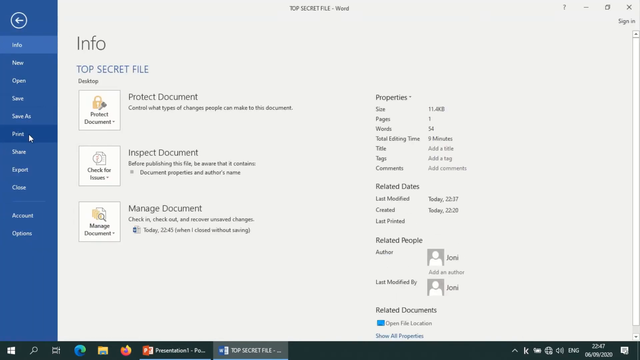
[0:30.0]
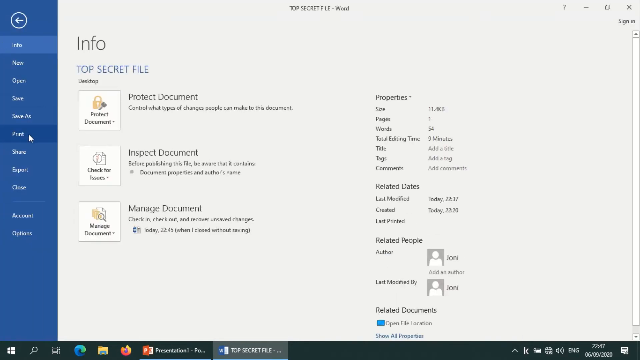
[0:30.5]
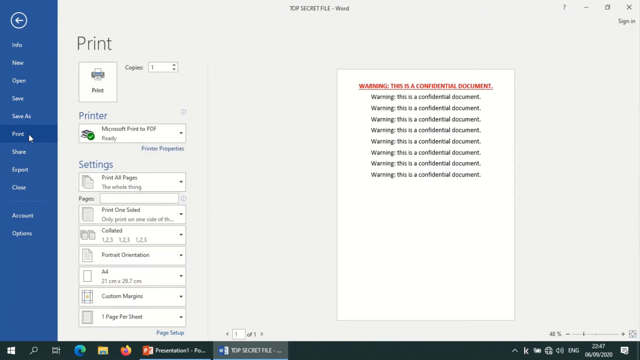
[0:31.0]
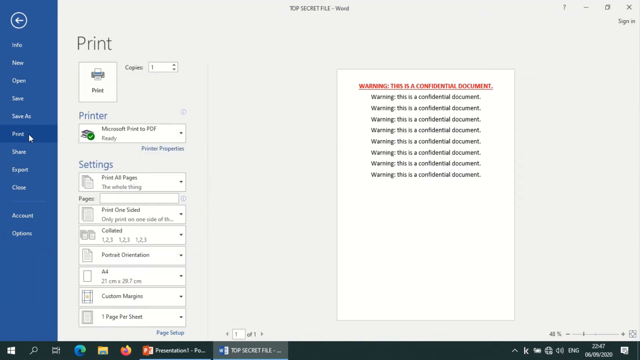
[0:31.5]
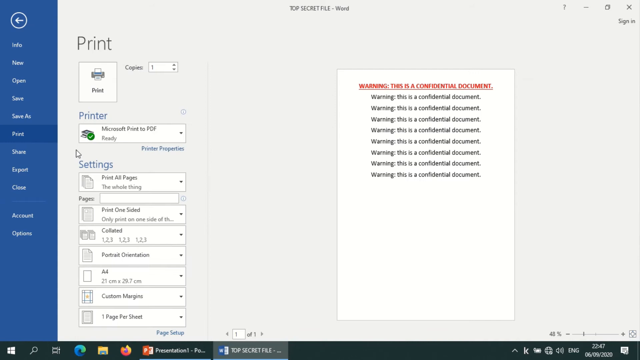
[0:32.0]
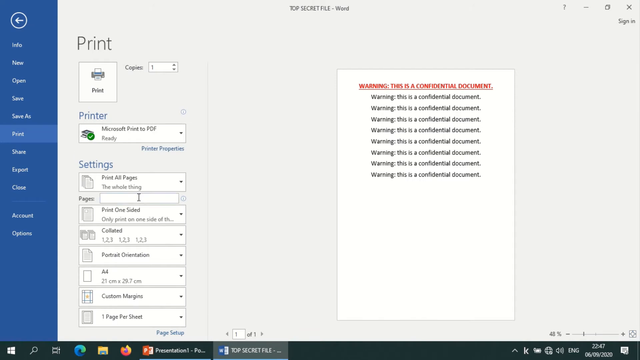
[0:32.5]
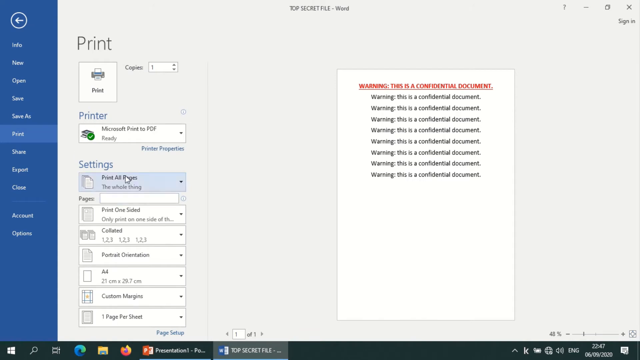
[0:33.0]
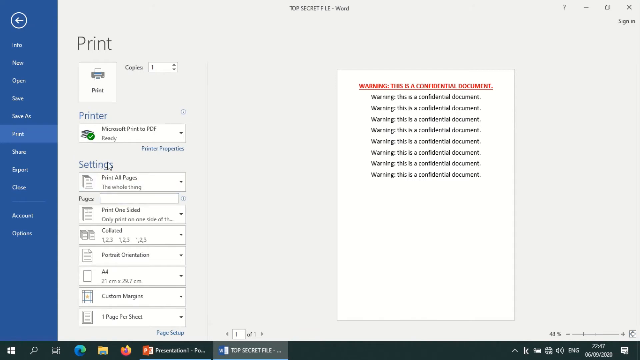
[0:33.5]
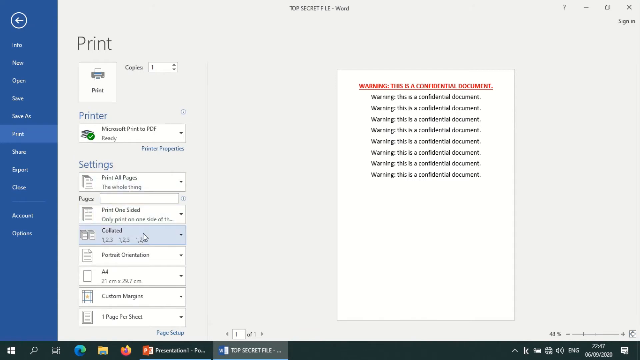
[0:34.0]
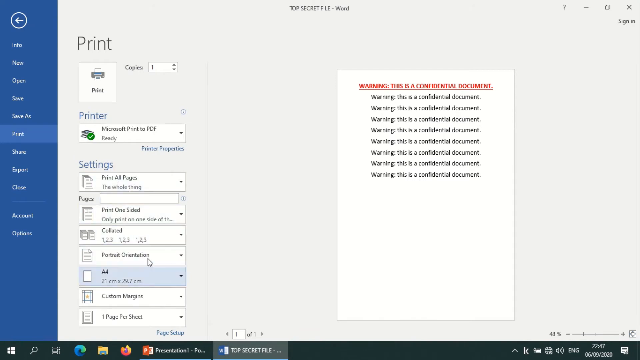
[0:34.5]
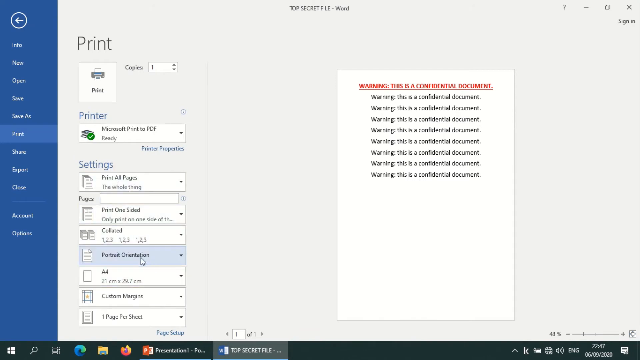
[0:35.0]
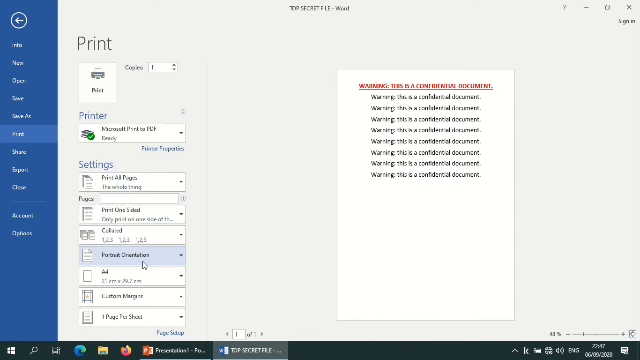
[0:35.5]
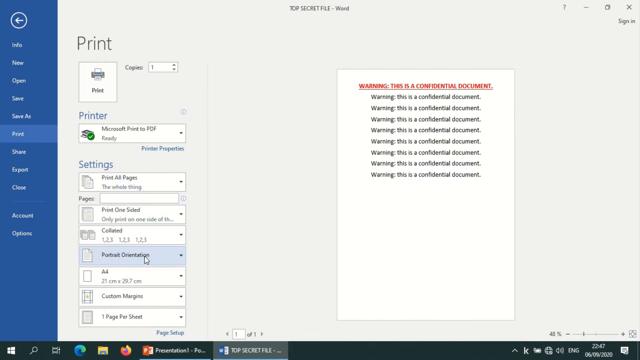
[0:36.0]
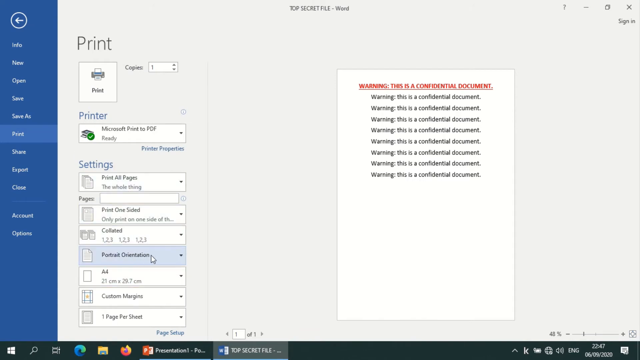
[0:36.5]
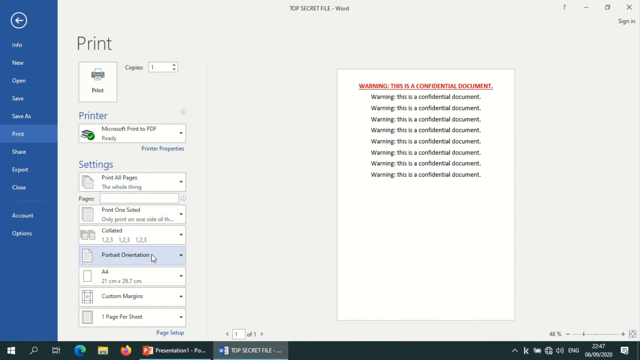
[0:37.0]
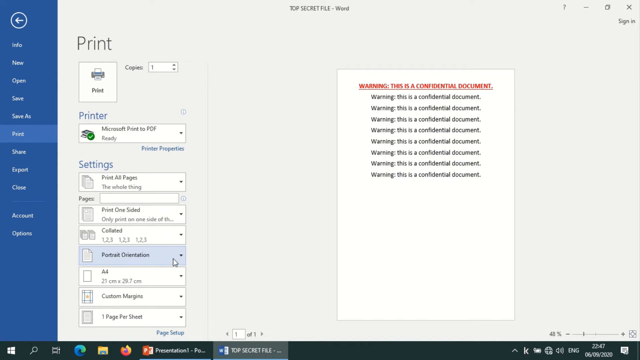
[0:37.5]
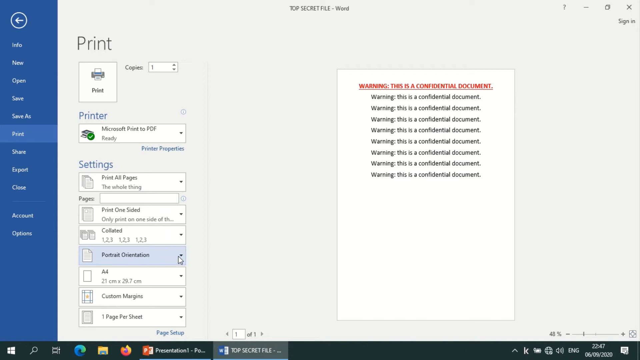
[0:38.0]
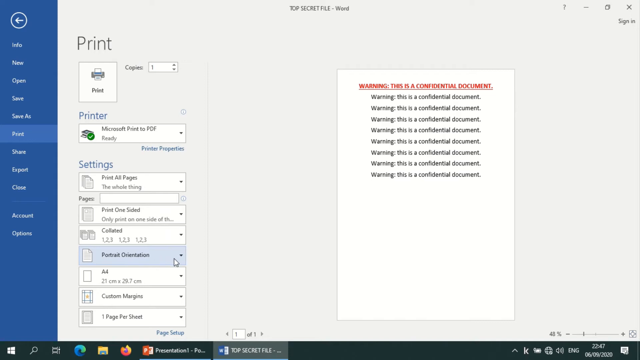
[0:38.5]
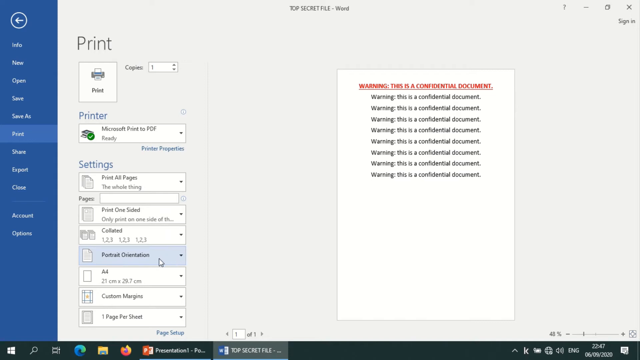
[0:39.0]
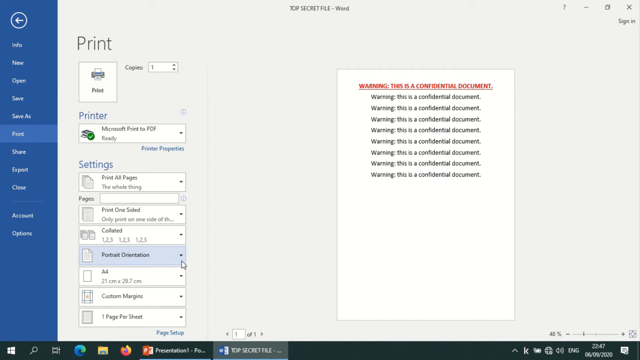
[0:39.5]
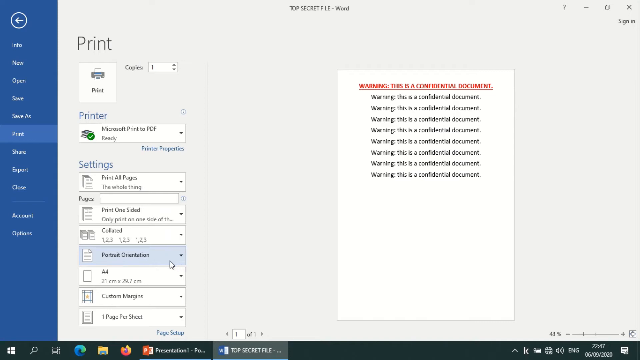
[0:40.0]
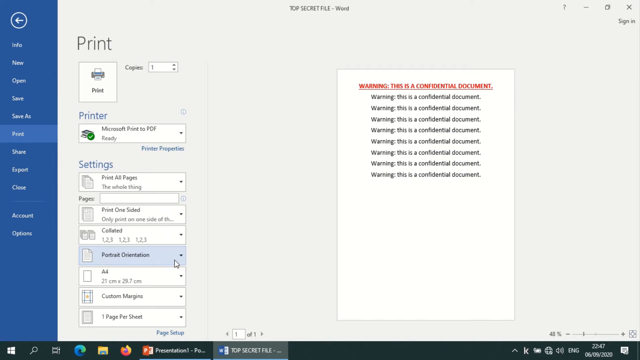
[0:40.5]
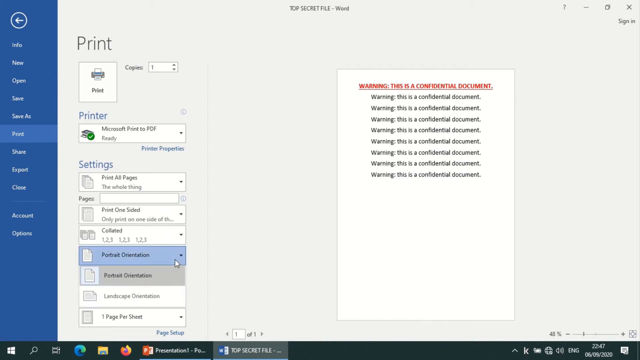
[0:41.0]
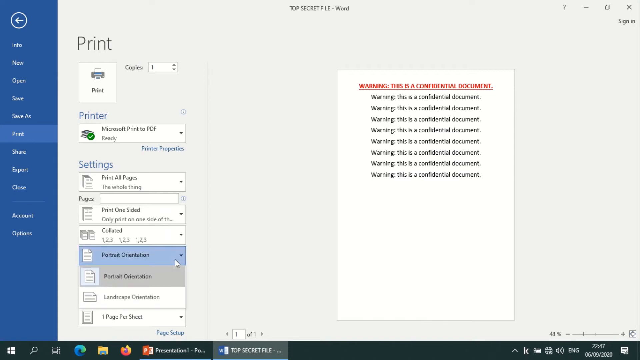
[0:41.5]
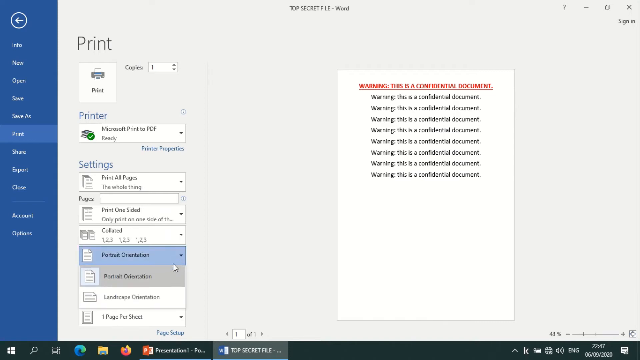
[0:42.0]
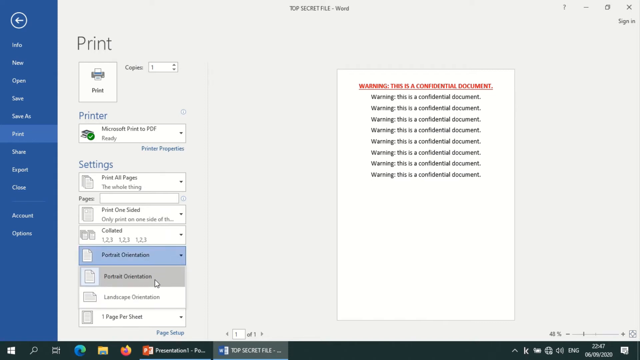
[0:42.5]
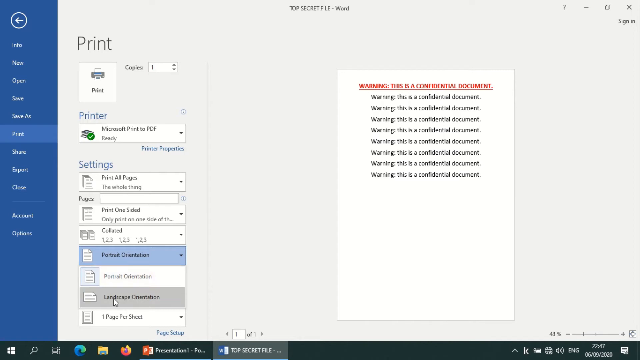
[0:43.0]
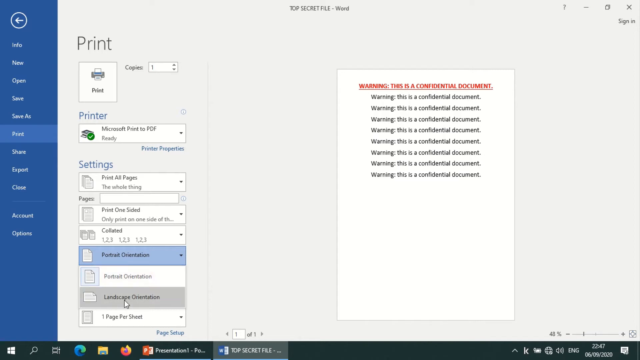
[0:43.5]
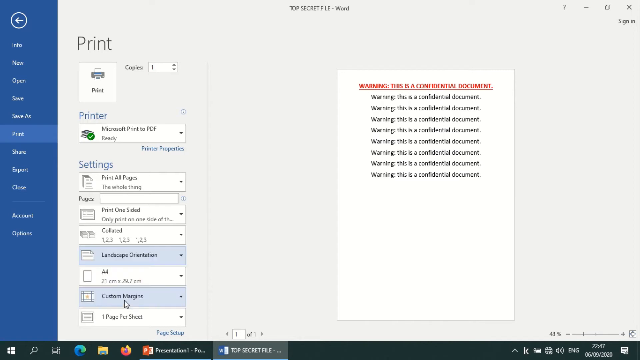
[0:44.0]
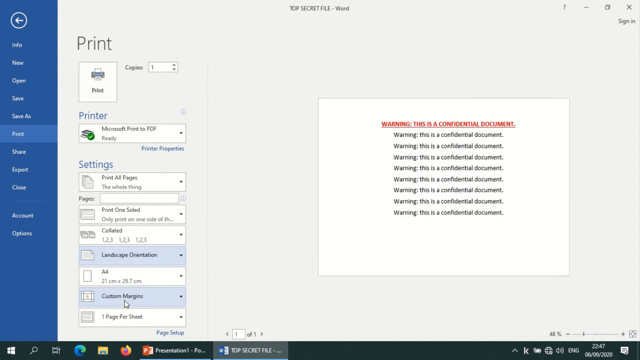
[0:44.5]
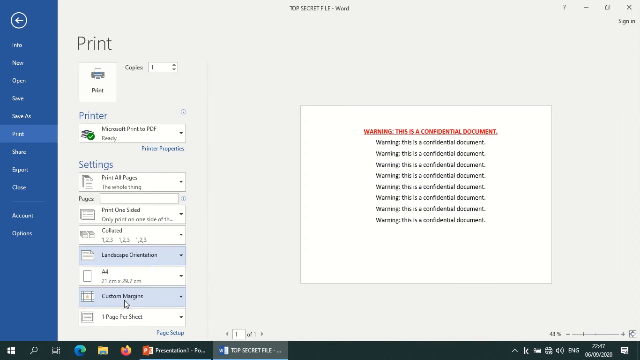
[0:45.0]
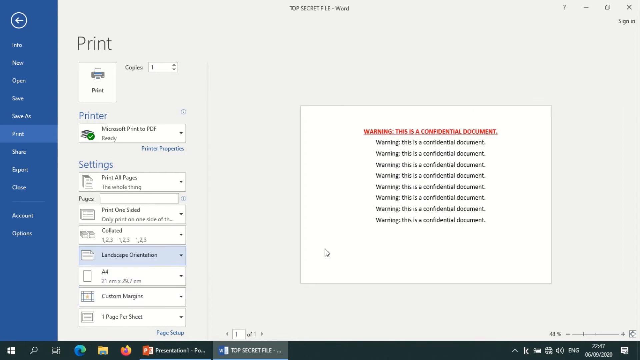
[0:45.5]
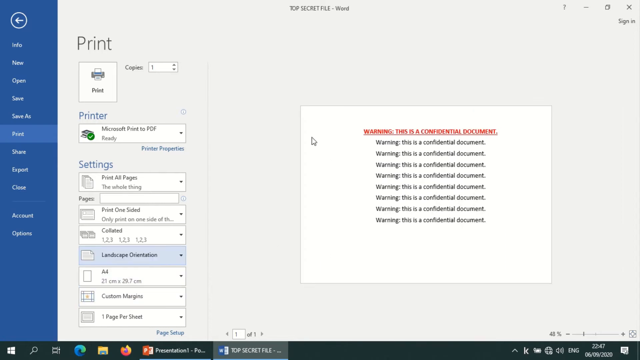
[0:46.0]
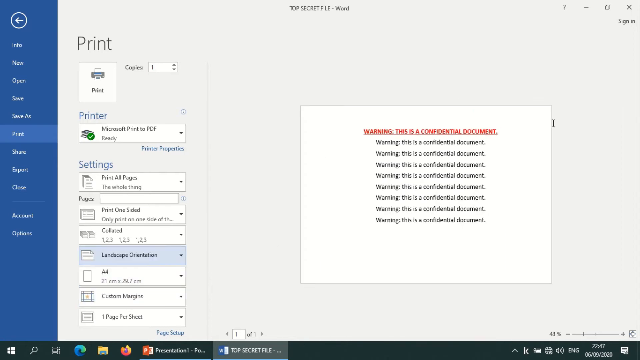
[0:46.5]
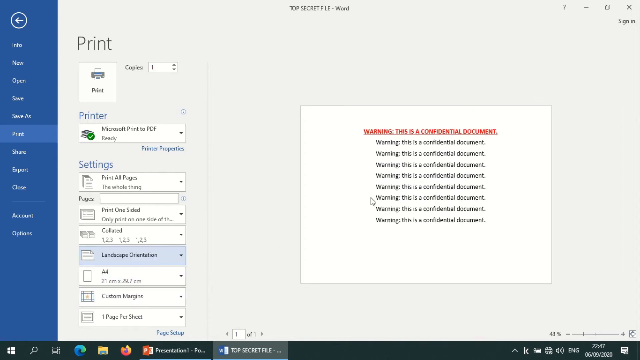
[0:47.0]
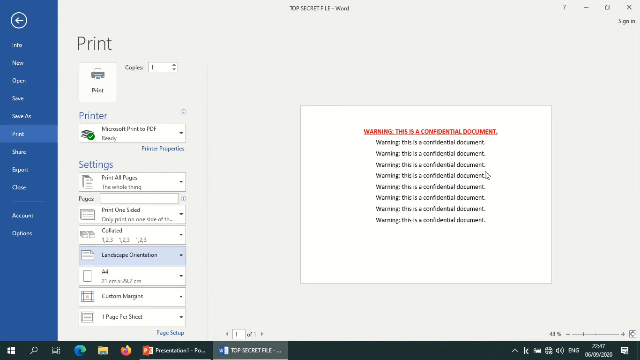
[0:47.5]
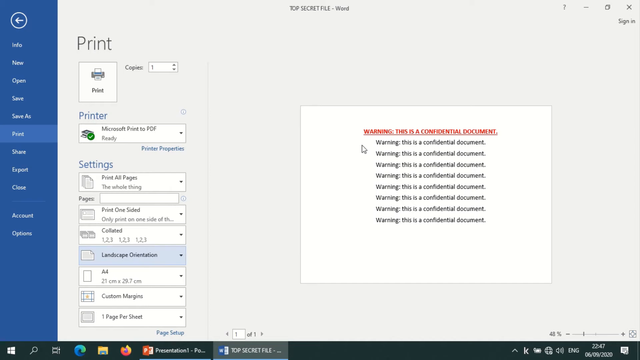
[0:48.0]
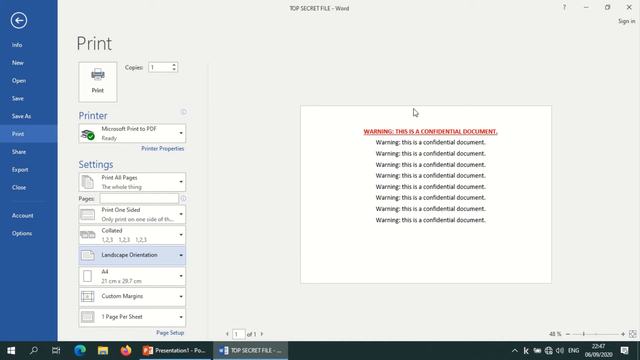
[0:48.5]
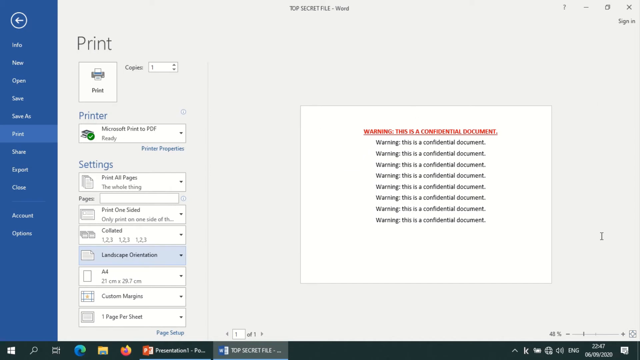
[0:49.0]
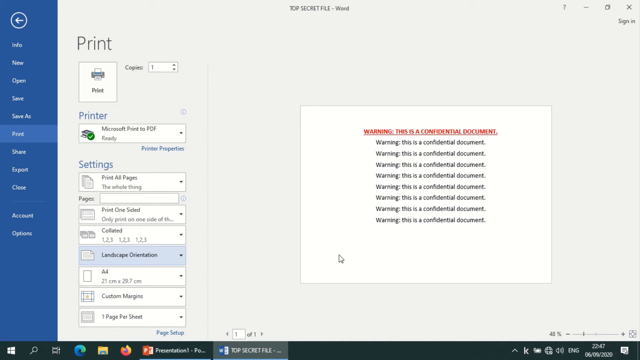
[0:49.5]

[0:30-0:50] The Word print screen is shown with the print button and a print preview. The settings include the number of copies, the printer set to Microsoft Print to PDF, print all pages, print one-sided, portrait orientation, A4, a customized margin, and one page per sheet. The user apparently goes to the portrait orientation option, opens its drop-down arrow and selects landscape orientation. The preview changes, and the file's orientation switches from portrait to landscape in Microsoft Word. The user seems to be preparing to print the document to a PDF using Microsoft Print to PDF.